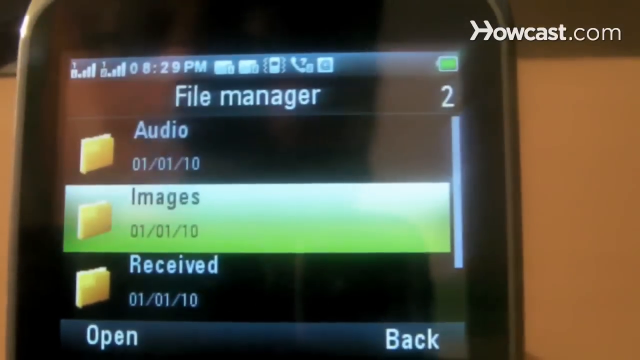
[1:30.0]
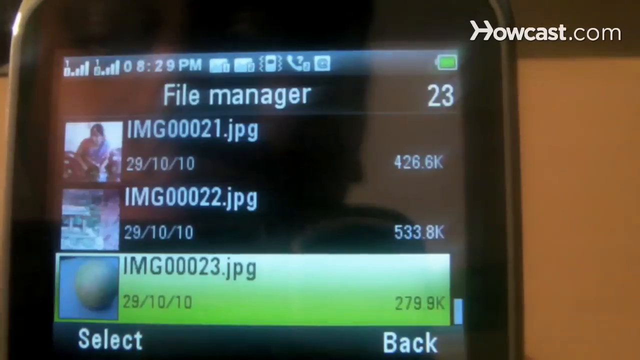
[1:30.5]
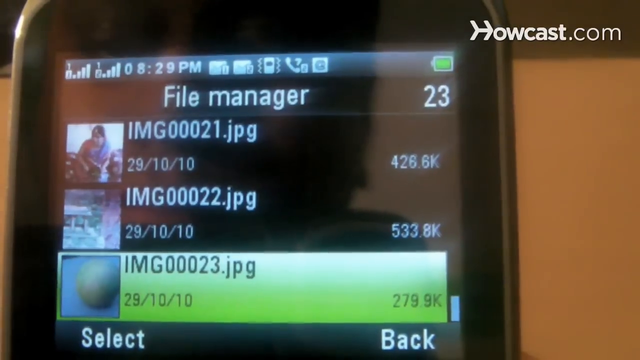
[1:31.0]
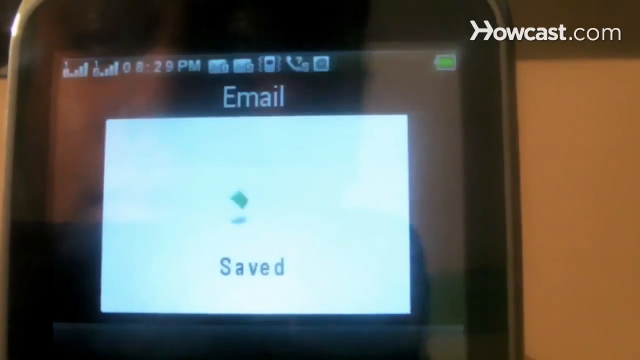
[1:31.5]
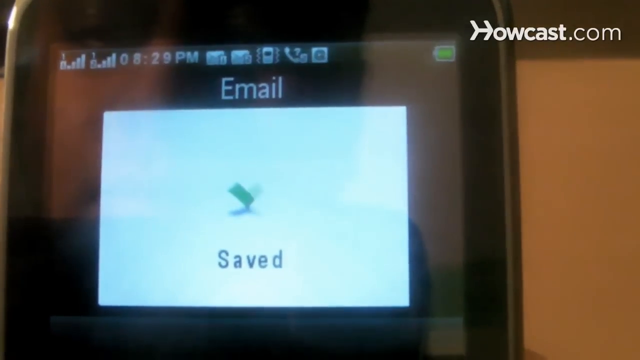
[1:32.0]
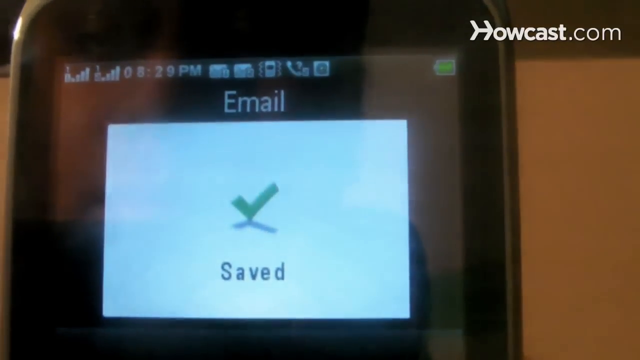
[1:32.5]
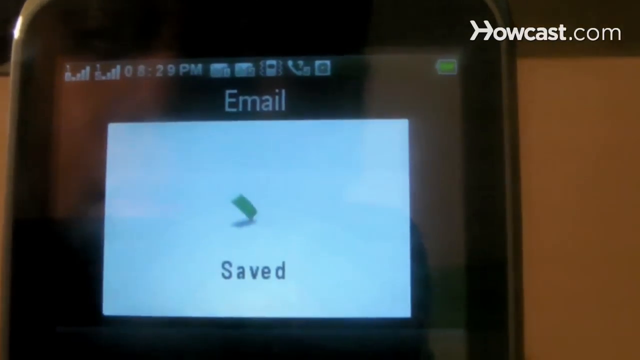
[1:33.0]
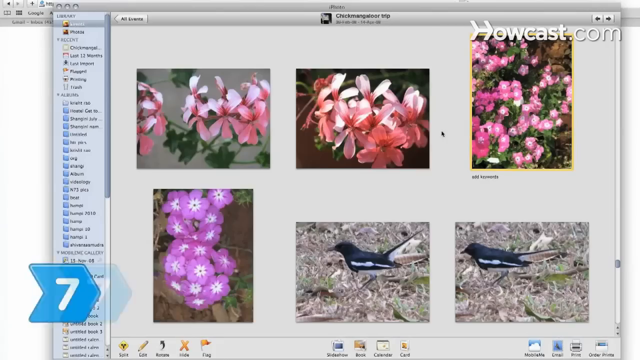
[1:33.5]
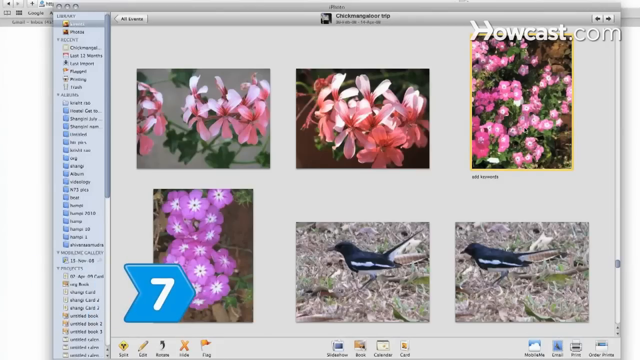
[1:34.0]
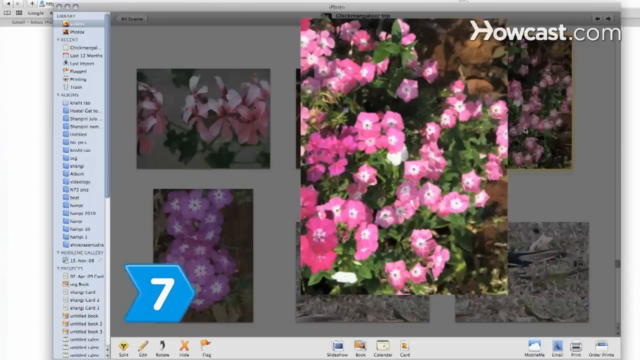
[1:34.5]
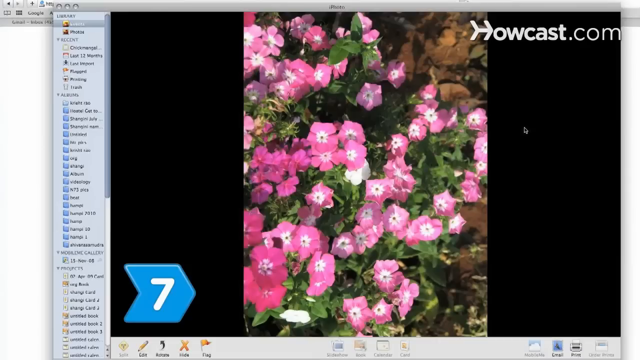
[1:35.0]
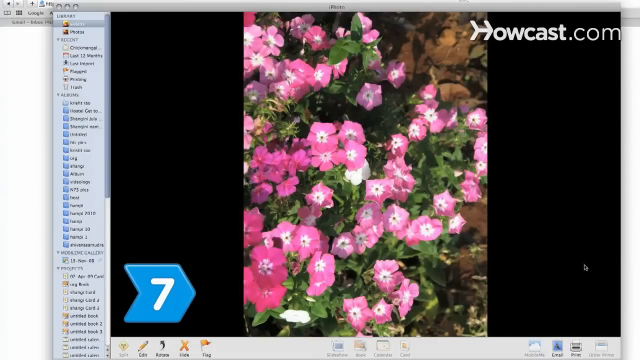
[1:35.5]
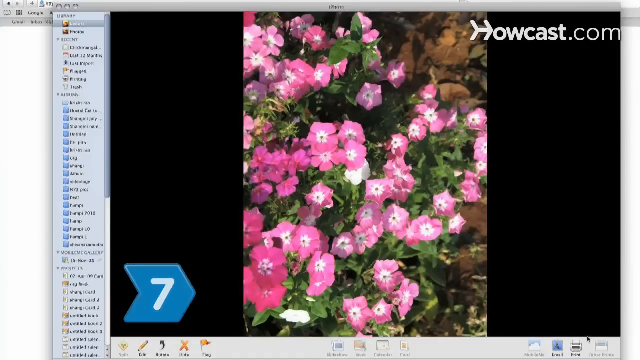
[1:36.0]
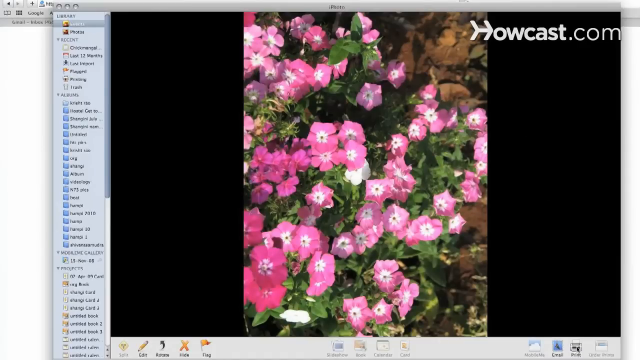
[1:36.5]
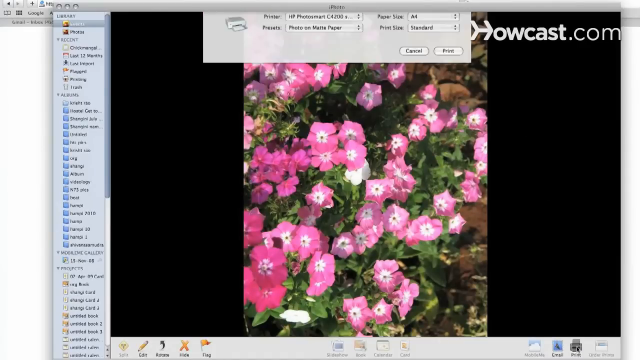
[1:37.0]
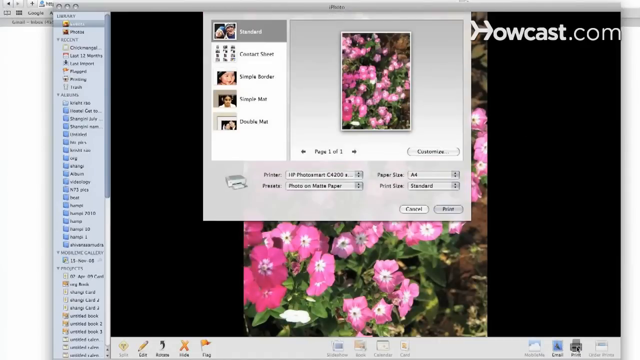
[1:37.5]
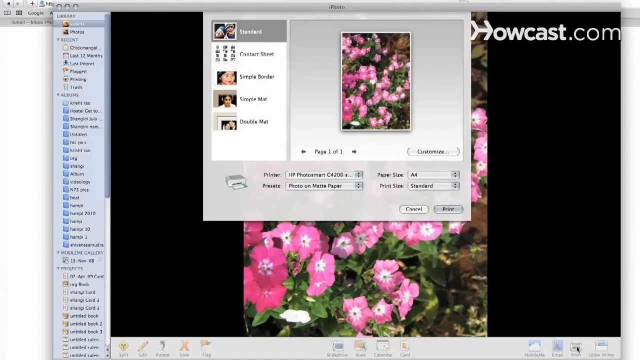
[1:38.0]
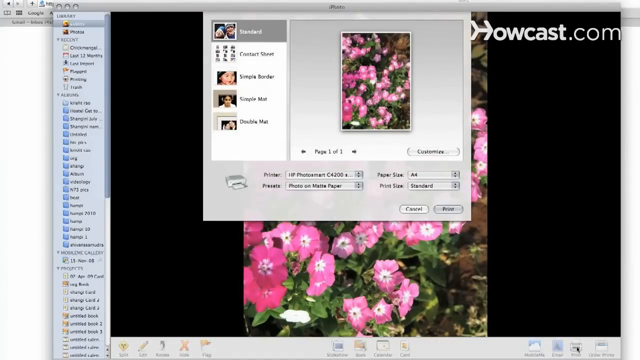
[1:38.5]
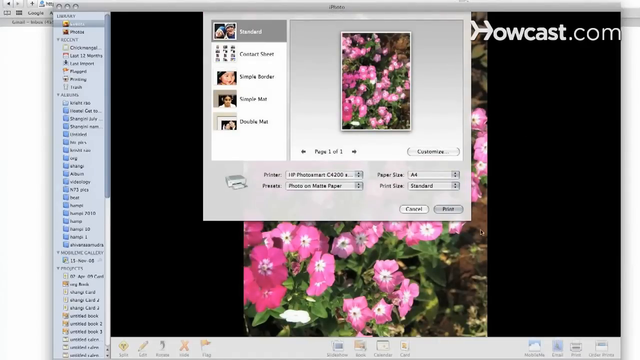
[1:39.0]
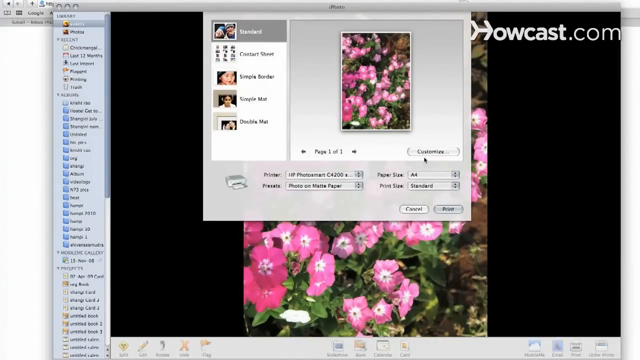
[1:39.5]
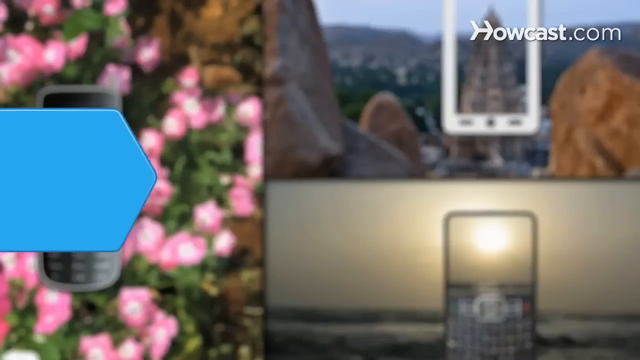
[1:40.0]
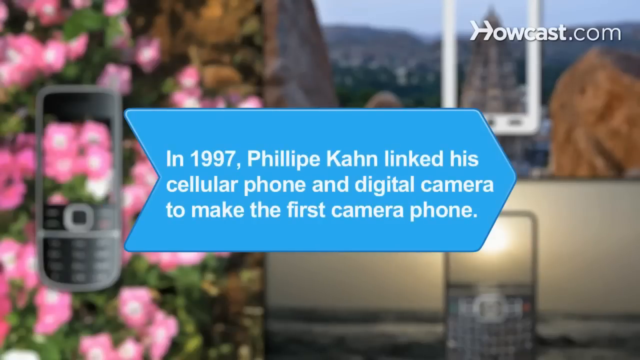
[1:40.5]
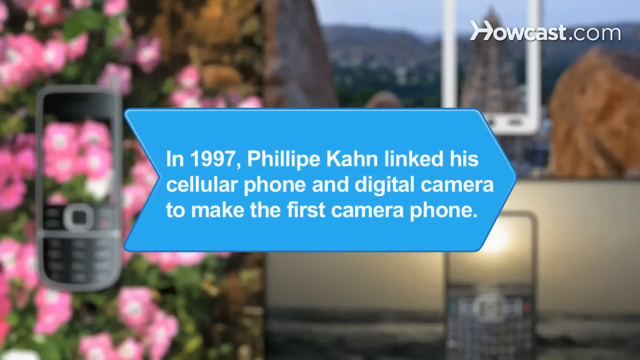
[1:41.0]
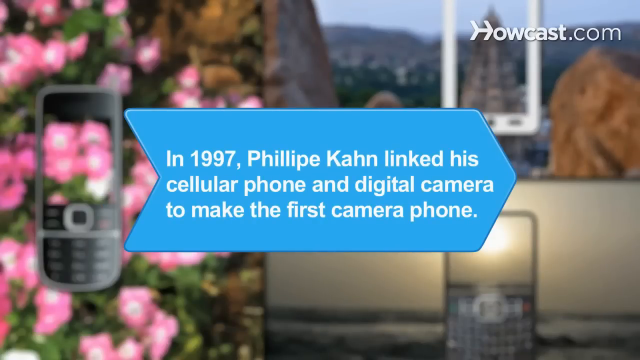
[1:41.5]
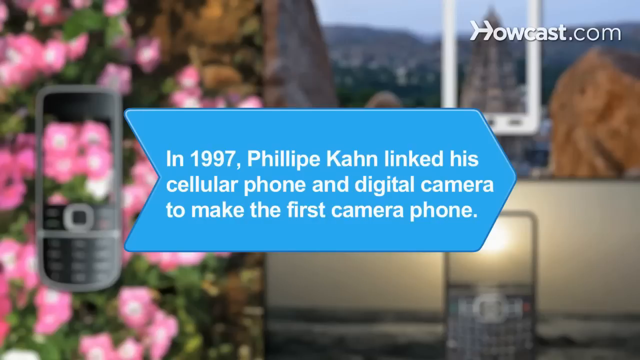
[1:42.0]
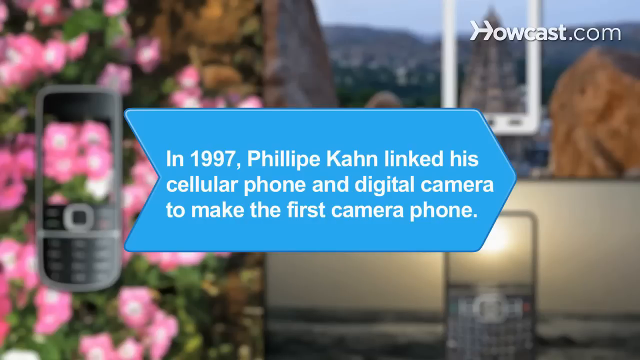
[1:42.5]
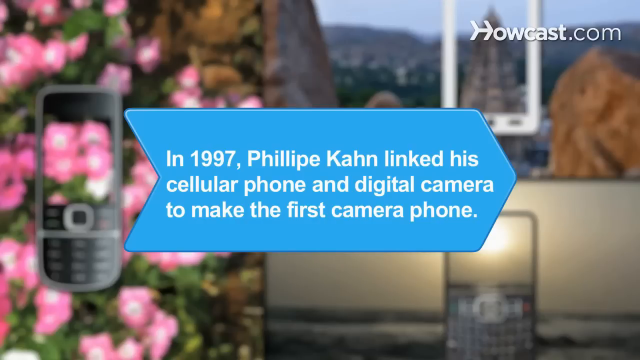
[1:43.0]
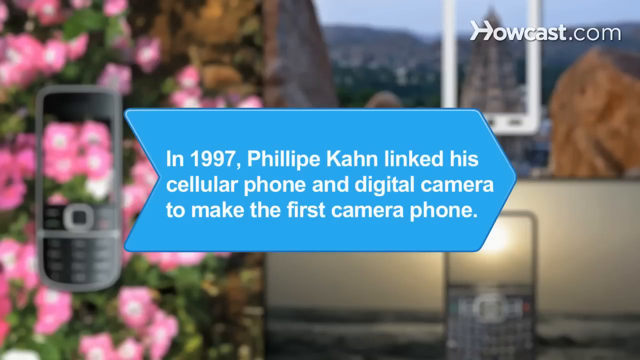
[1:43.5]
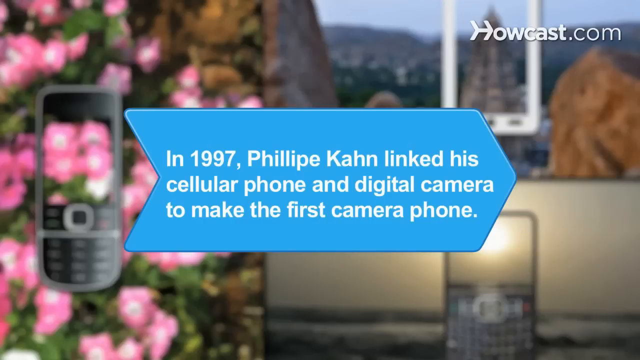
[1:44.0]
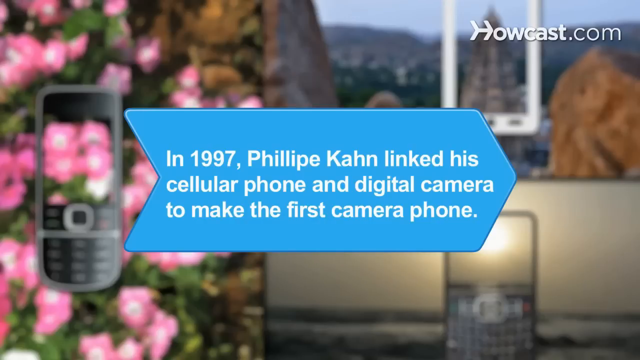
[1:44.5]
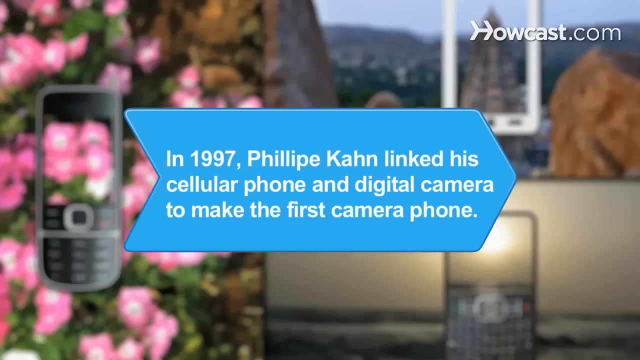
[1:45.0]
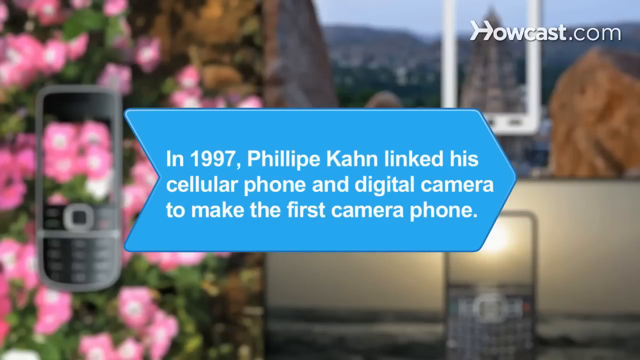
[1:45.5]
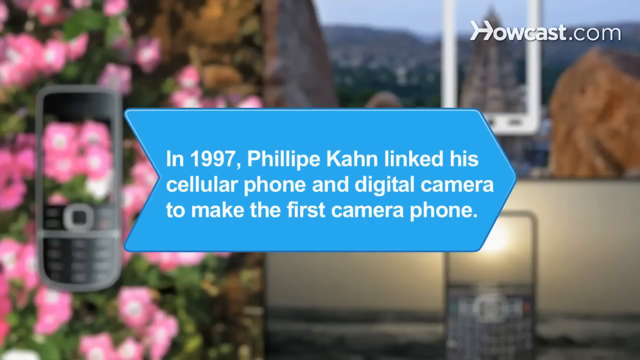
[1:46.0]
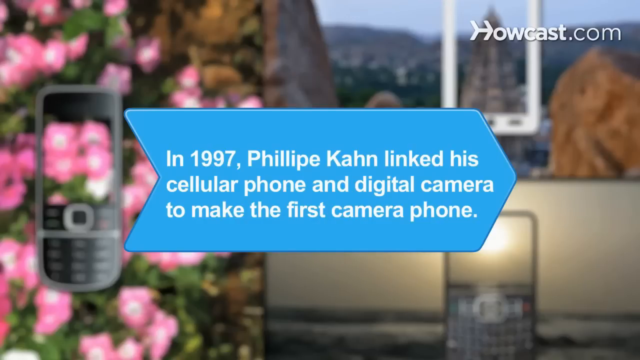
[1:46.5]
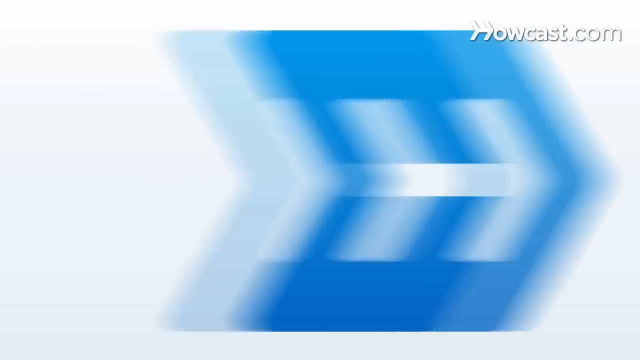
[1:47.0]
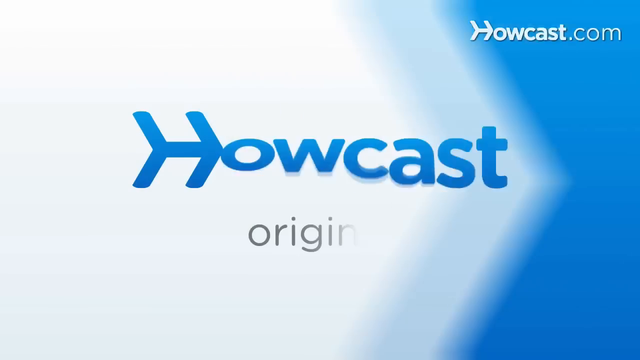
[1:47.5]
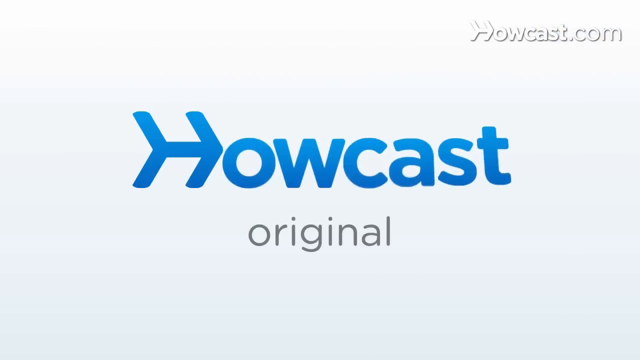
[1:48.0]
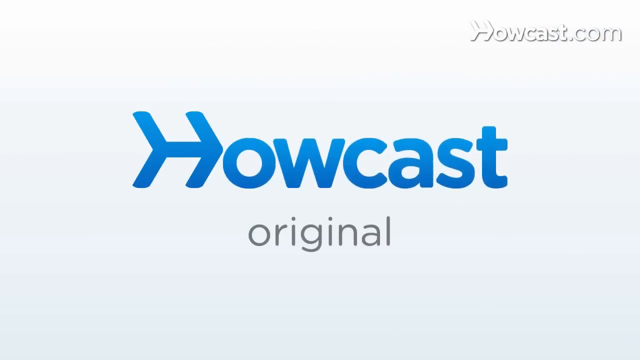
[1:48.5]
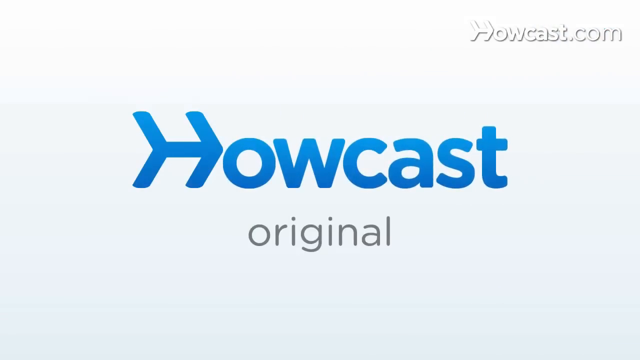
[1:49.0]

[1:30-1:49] The demonstration of adding an image attachment to an email on the phone continues. The user selects the image to send, and the phone shows that the email was sent with the selected attachment. The seventh step follows, showing an image of some flowers with many options for it. A blue arrow-shaped note gives a piece of information about 1997, when a cellular phone and a digital camera were linked to make the first camera phone. The tutorial then seems to end, and the HowCast Original logo appears. "HowCast.com" is visible in the upper right of the screen throughout.